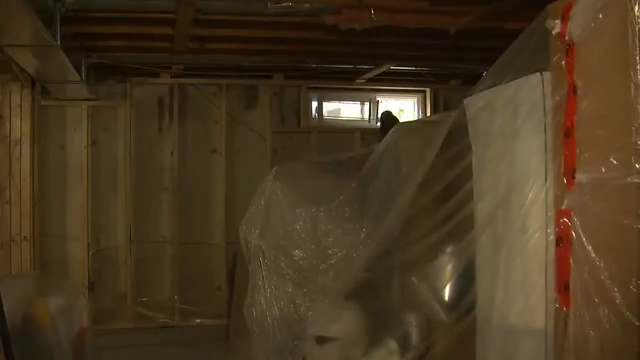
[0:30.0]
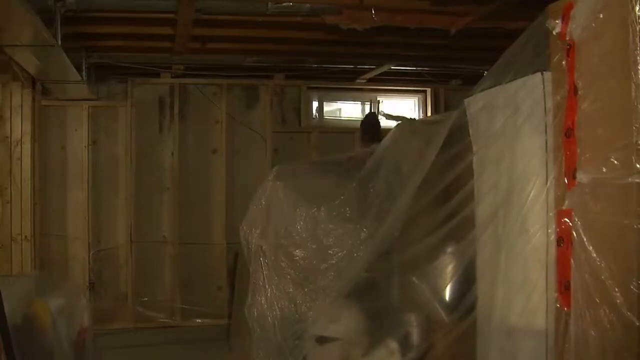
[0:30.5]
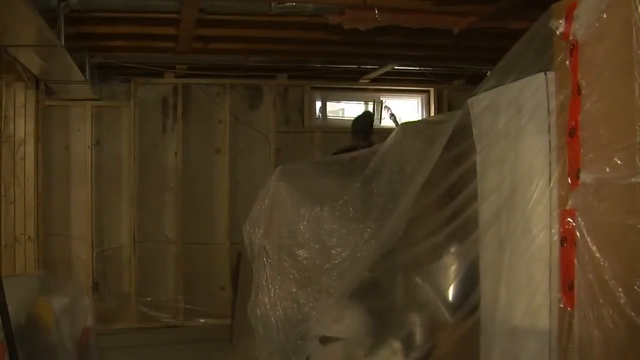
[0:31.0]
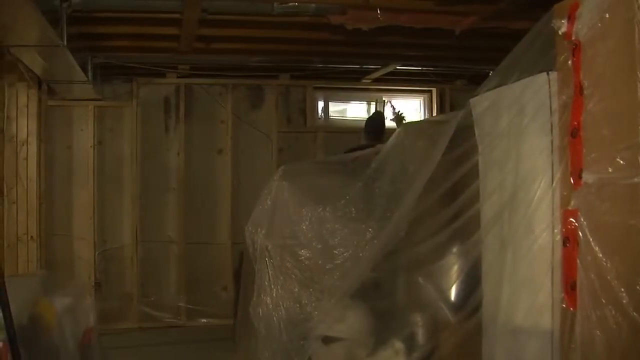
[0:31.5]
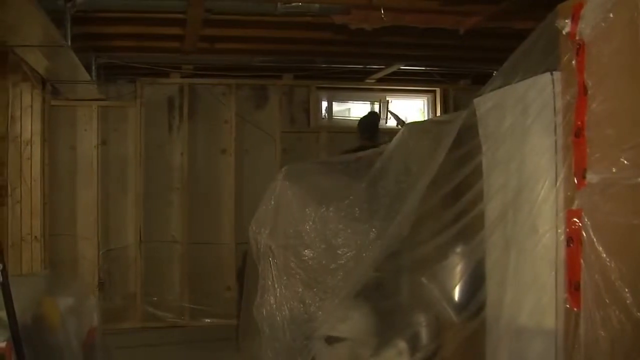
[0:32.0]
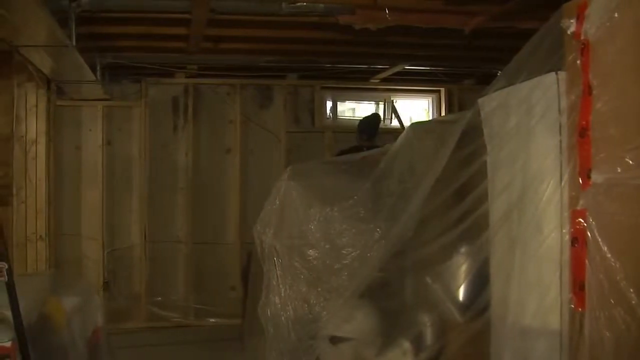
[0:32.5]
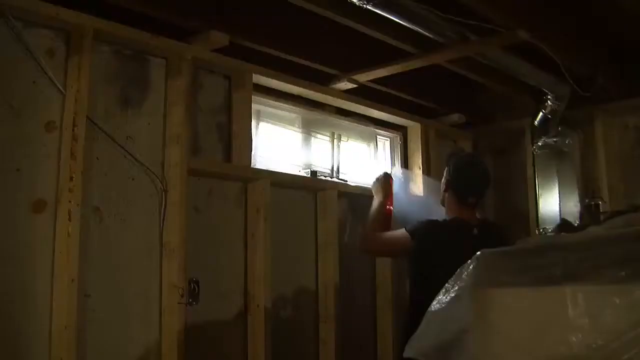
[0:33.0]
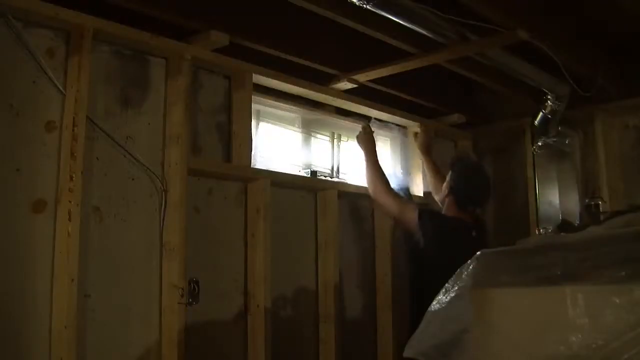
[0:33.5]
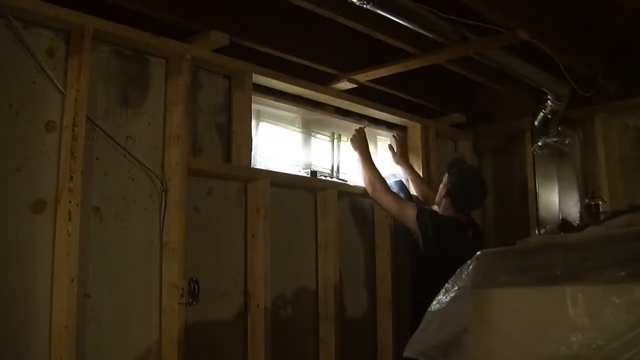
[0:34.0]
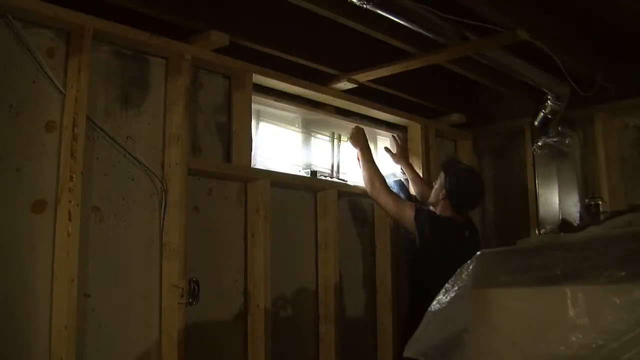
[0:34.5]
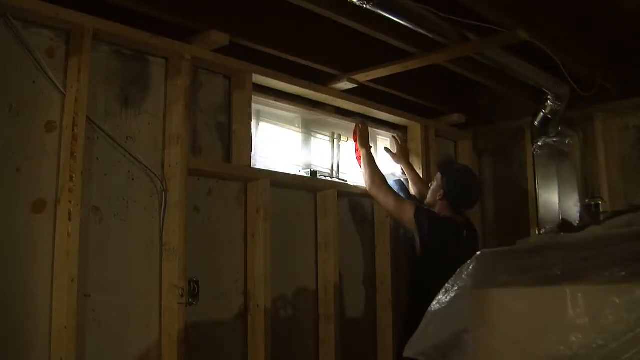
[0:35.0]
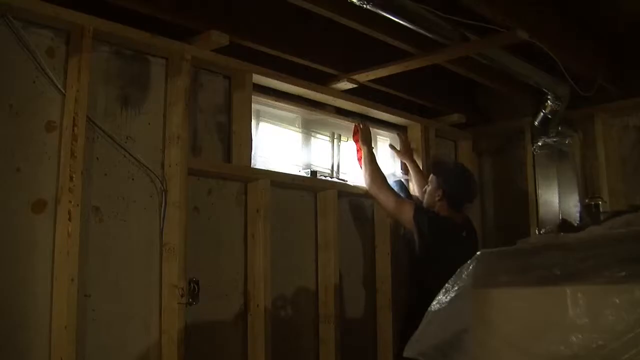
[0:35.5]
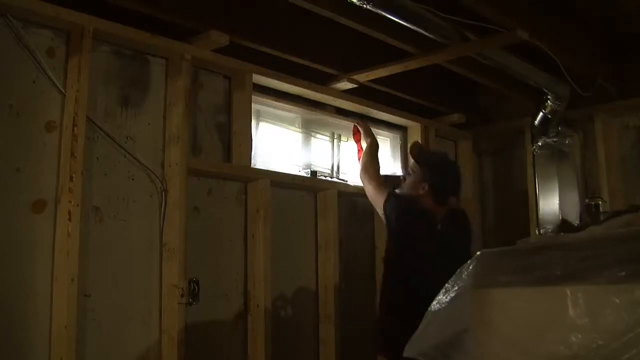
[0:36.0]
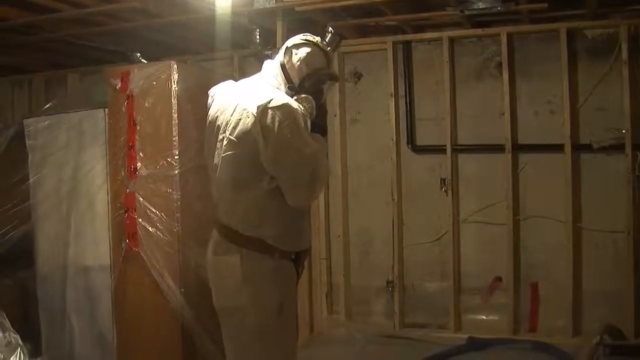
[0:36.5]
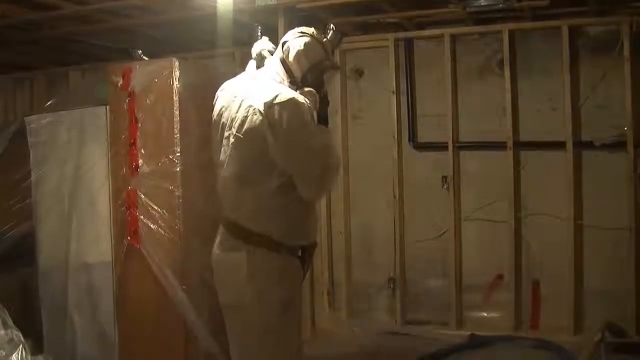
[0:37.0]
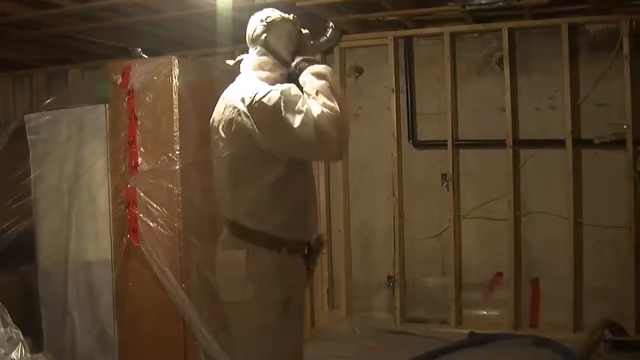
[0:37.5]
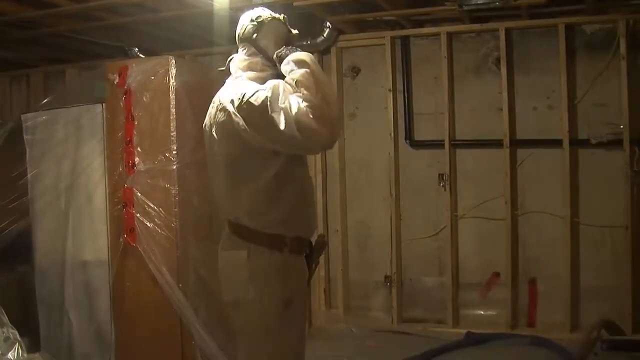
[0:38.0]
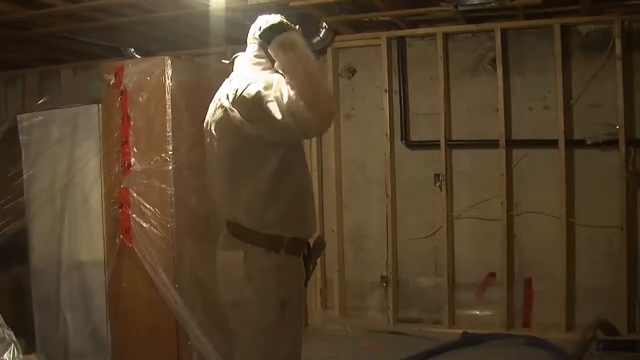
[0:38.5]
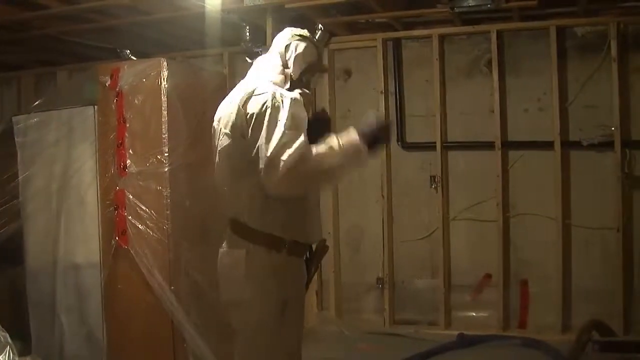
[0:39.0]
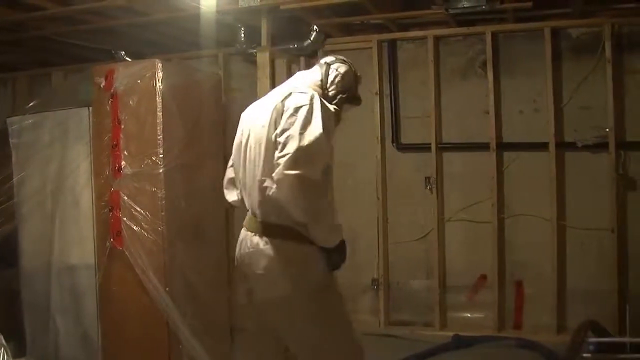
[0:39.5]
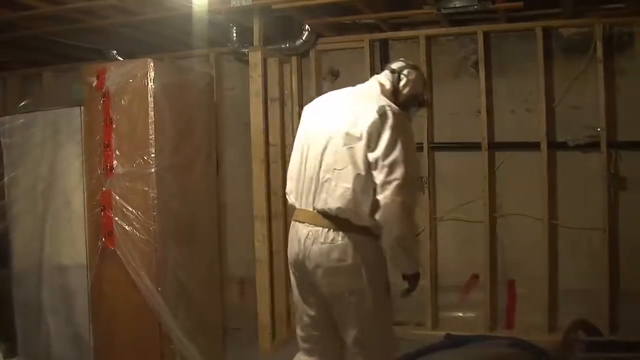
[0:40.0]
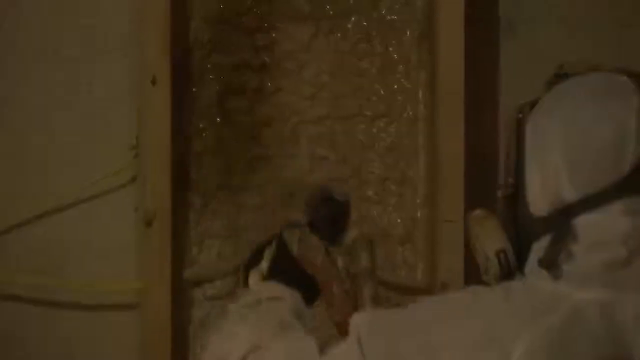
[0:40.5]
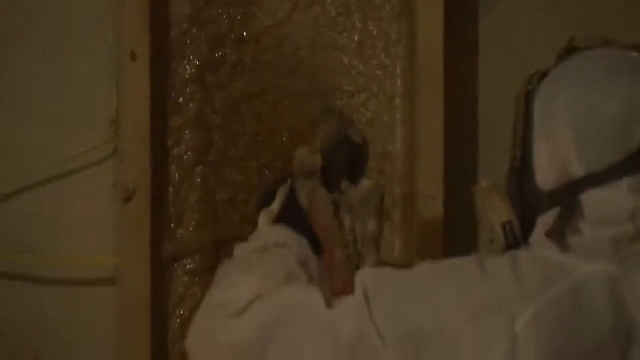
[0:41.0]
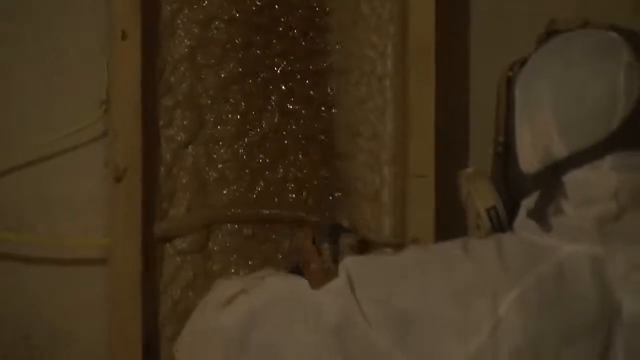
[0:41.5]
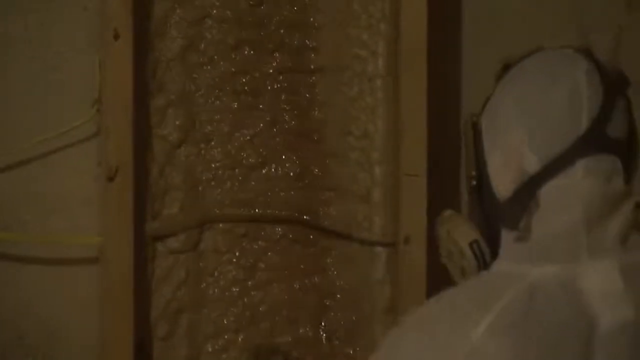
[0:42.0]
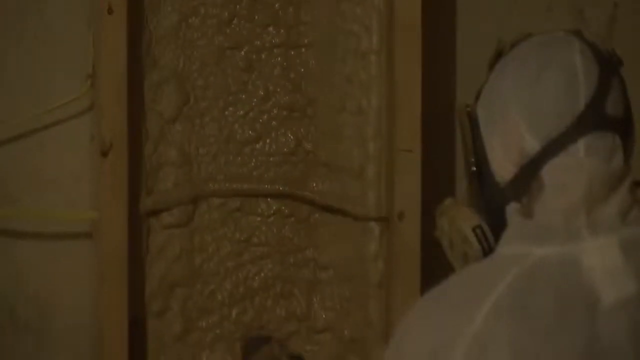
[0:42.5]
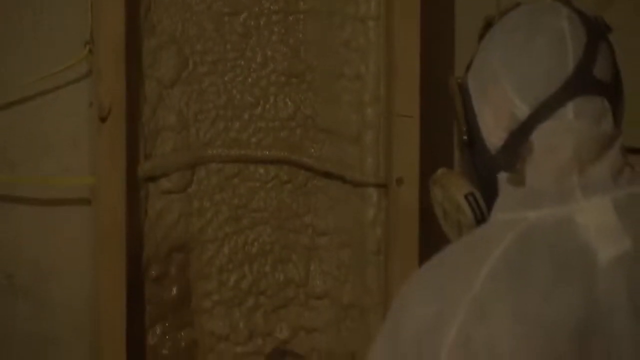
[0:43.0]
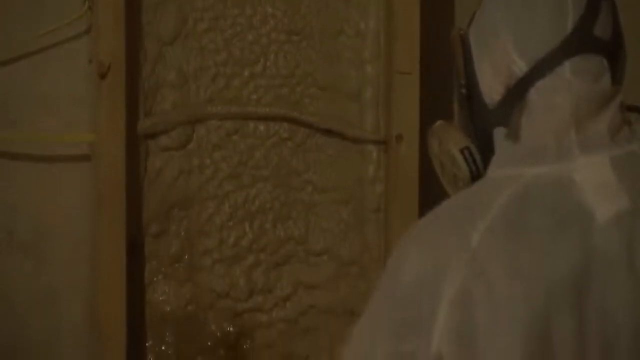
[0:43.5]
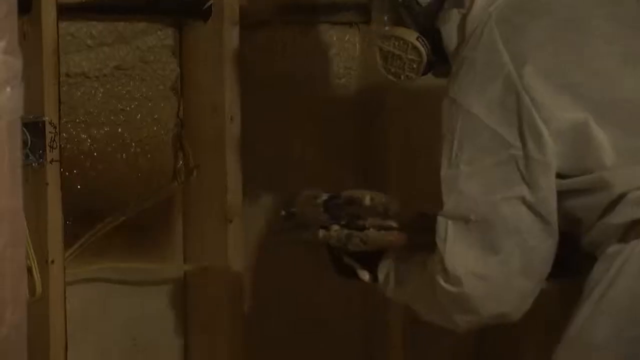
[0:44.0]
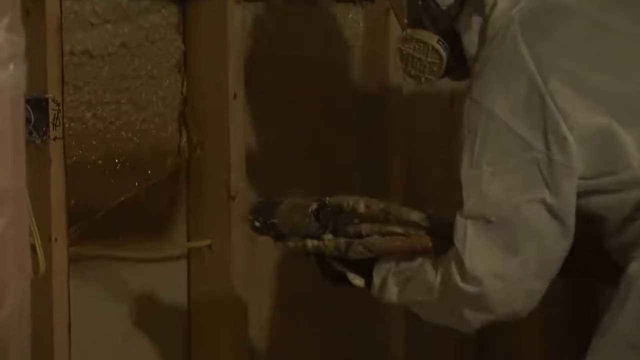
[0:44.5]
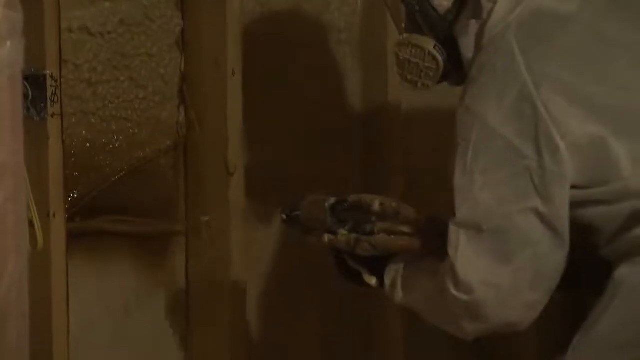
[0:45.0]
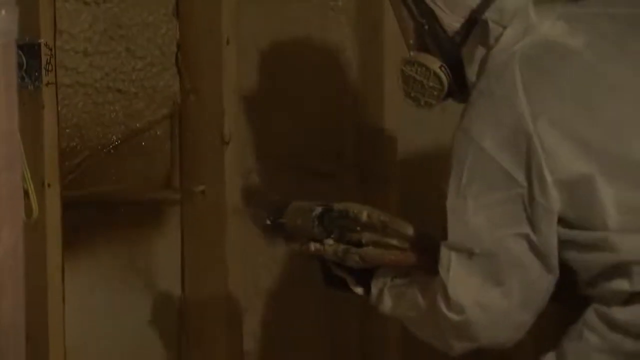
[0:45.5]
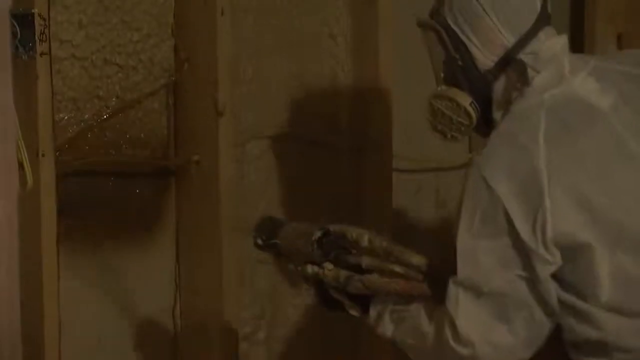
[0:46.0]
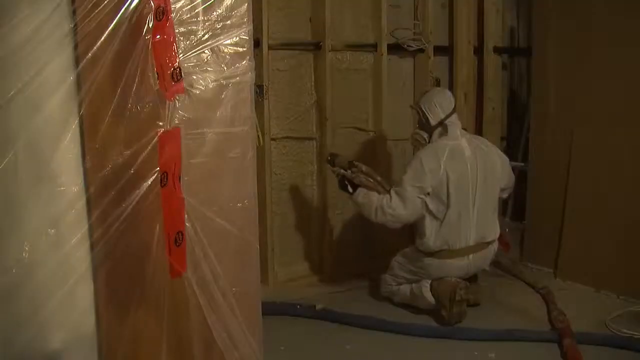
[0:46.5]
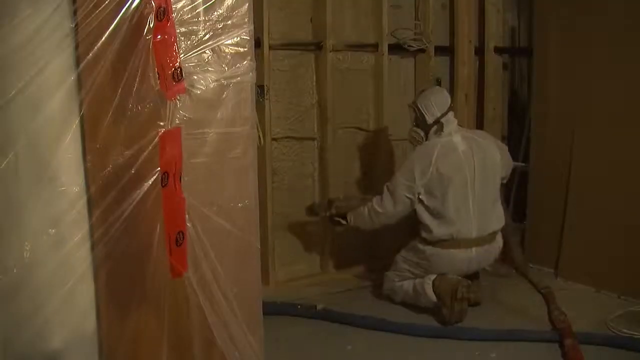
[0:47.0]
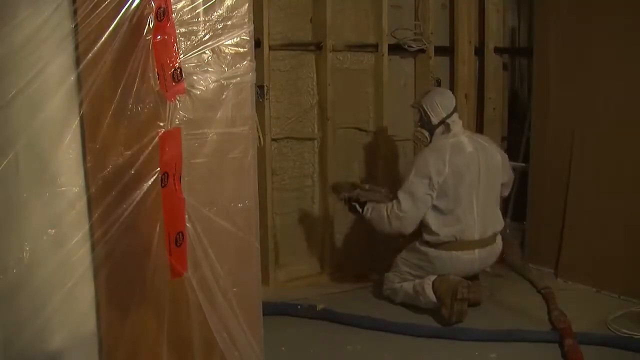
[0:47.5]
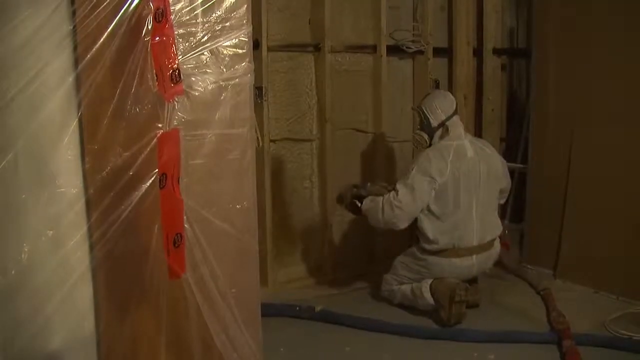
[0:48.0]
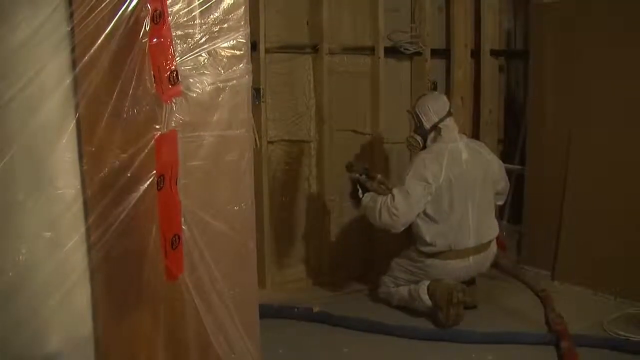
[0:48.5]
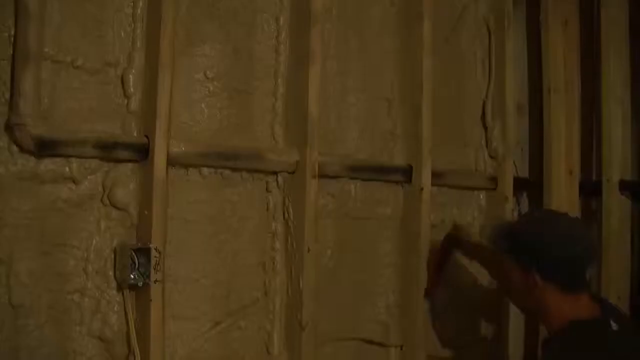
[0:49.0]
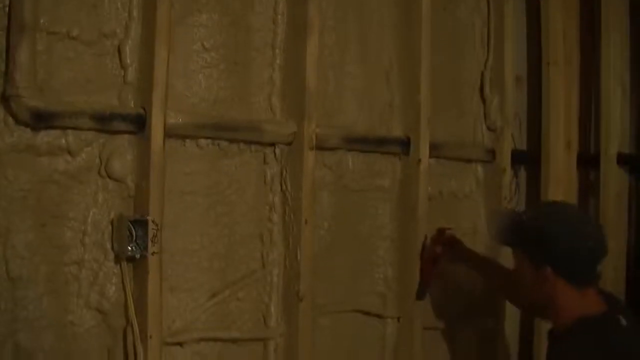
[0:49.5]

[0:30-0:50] Inside the house, which looks like it is under construction, it is unclear whether the space is a basement. Tarps are everywhere and it is unfinished. At the back there is a little window, and a man appears to be bringing the hose in through it and taping up the window around the hose. He now has his full jumpsuit on, all strapped up, with everything covered including his face; he pulls his head covering on all the way and wears a respiratory mask. He sprays material, possibly insulation, onto the unfinished walls; it looks wet and brownish-beige and leaves a thick coating. Kneeling, he keeps spraying it in between the sections of the unfinished wall. Then another man is seen with him, helping and doing exactly the same thing.